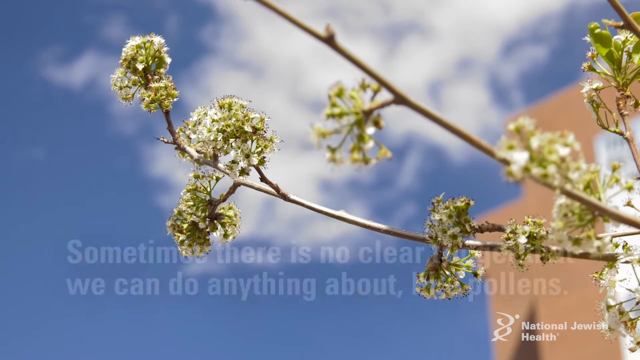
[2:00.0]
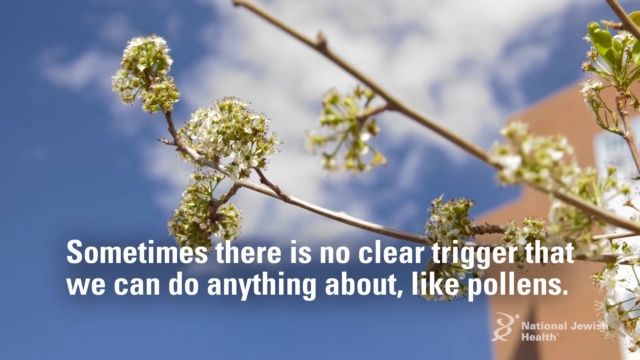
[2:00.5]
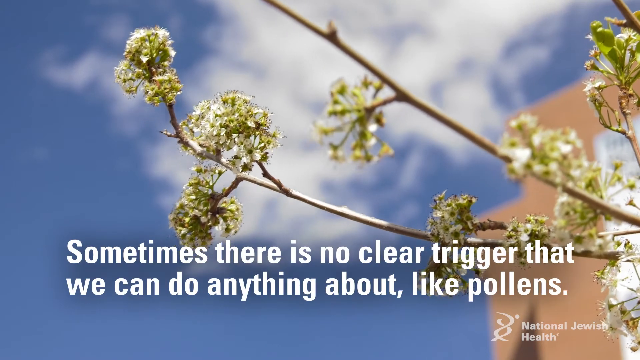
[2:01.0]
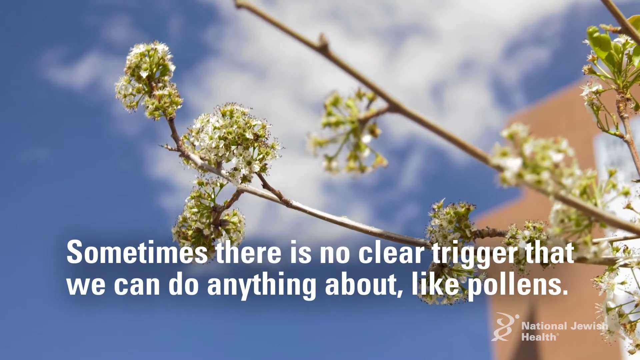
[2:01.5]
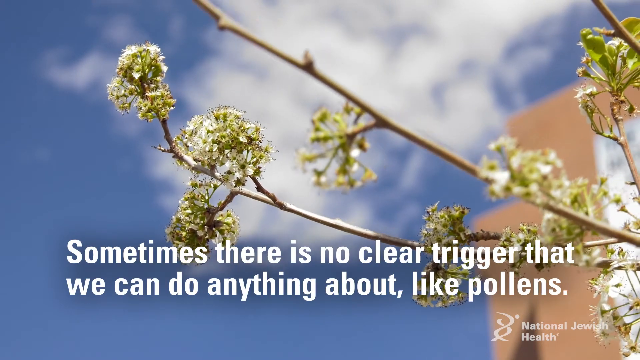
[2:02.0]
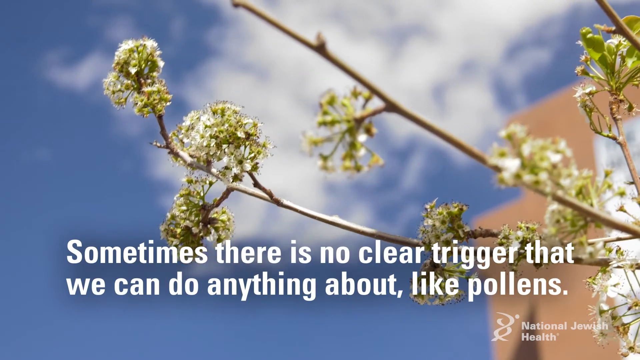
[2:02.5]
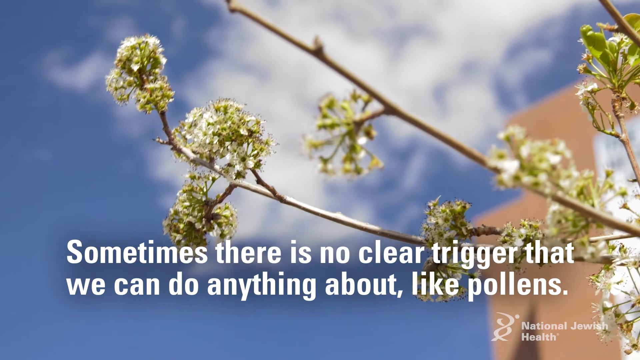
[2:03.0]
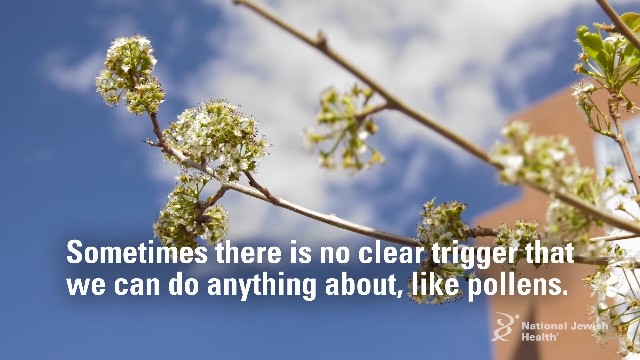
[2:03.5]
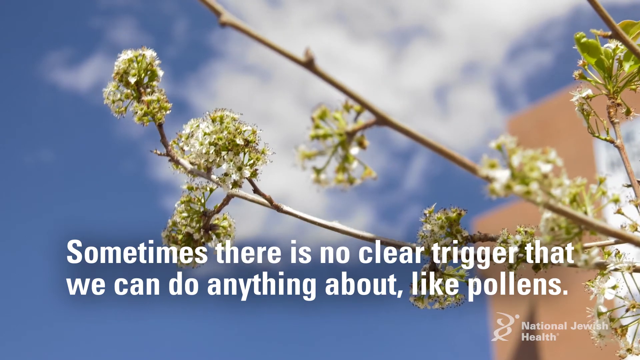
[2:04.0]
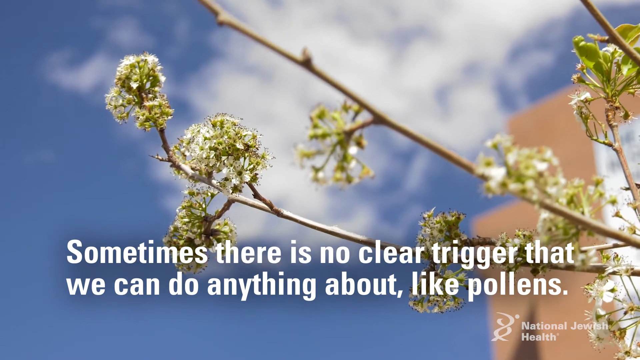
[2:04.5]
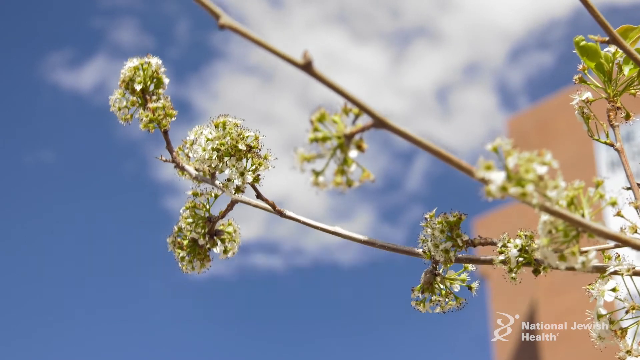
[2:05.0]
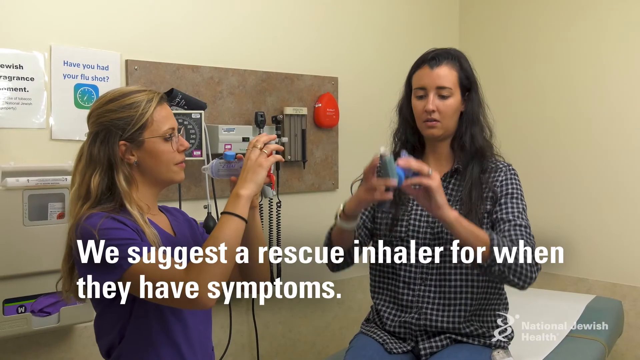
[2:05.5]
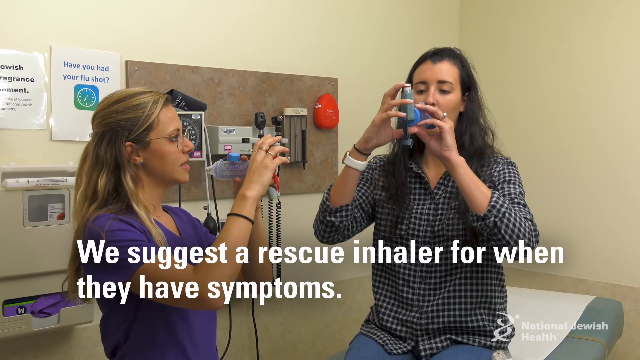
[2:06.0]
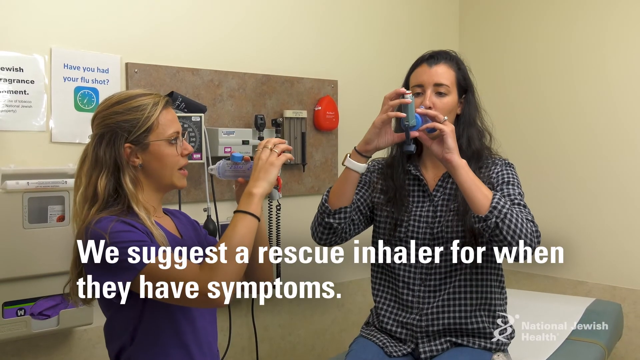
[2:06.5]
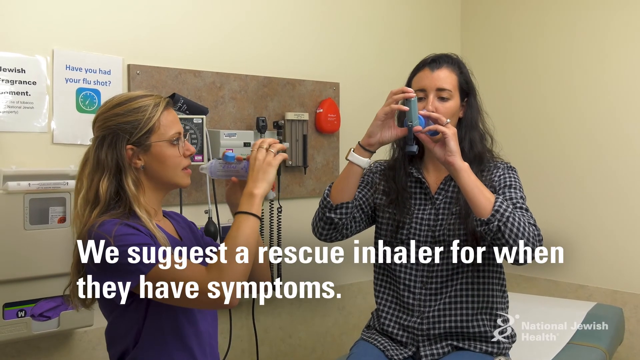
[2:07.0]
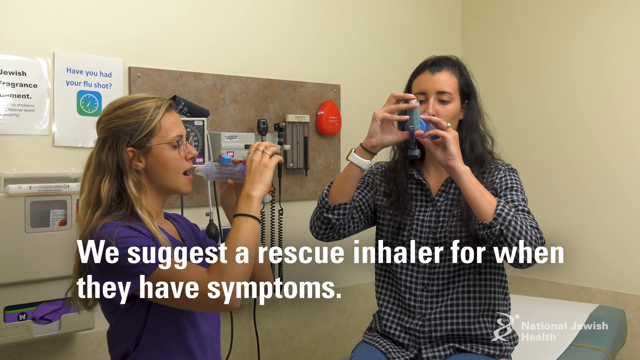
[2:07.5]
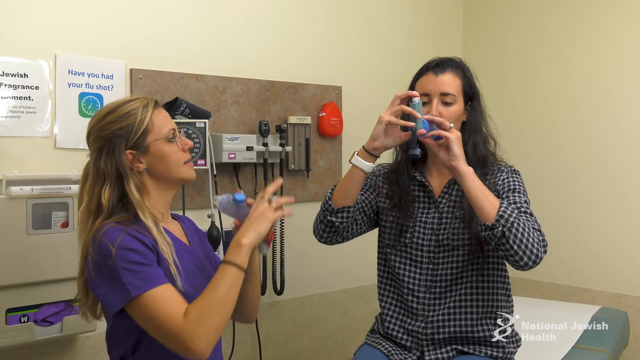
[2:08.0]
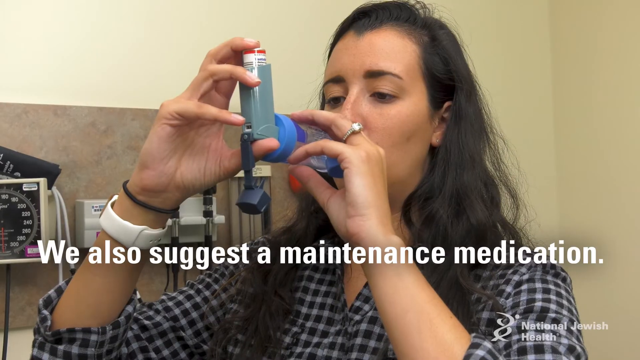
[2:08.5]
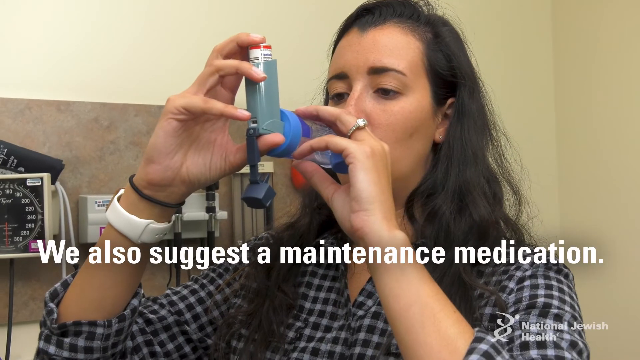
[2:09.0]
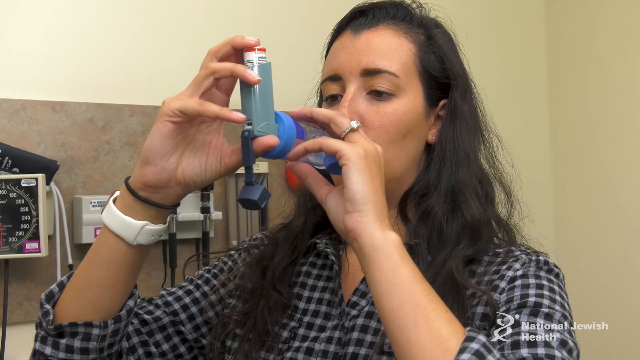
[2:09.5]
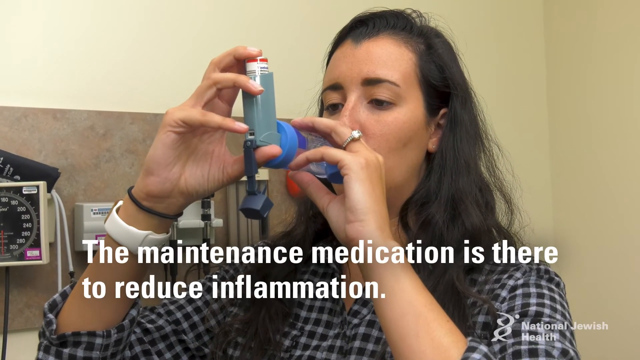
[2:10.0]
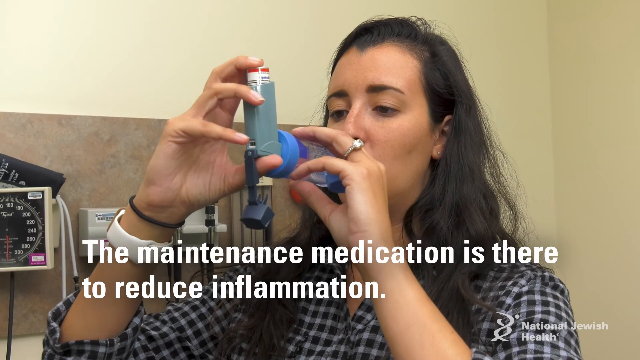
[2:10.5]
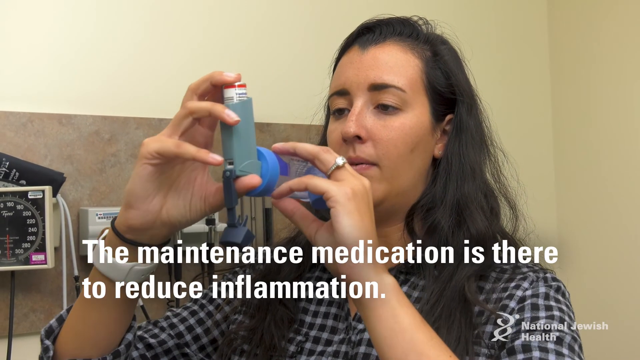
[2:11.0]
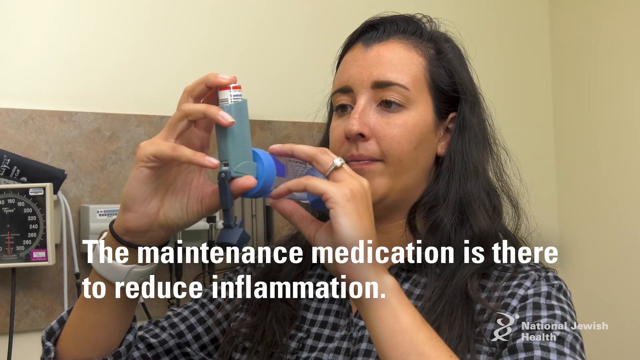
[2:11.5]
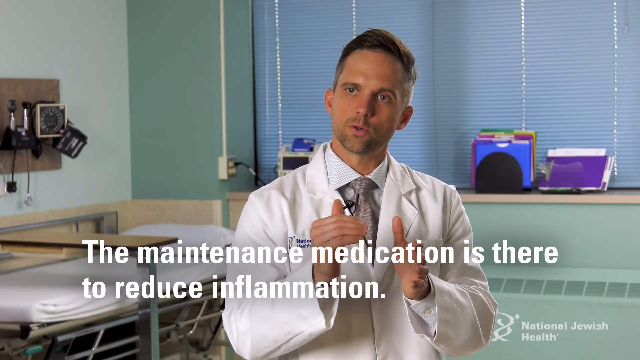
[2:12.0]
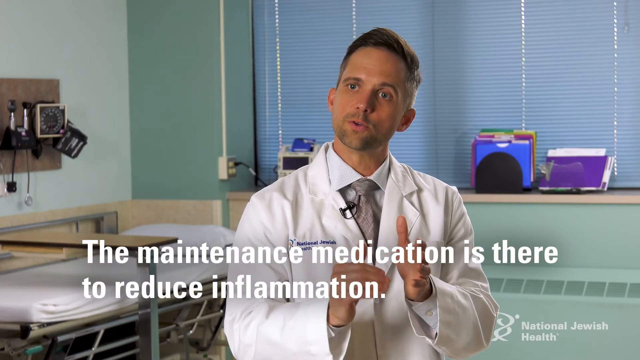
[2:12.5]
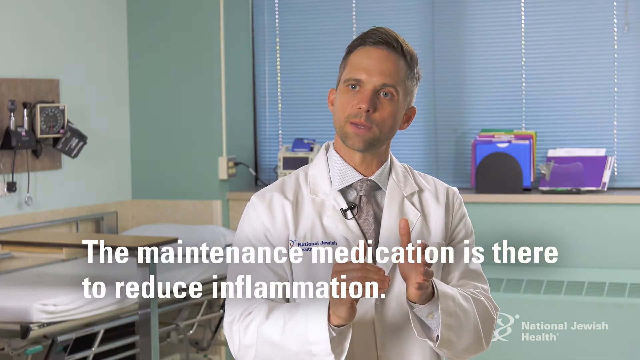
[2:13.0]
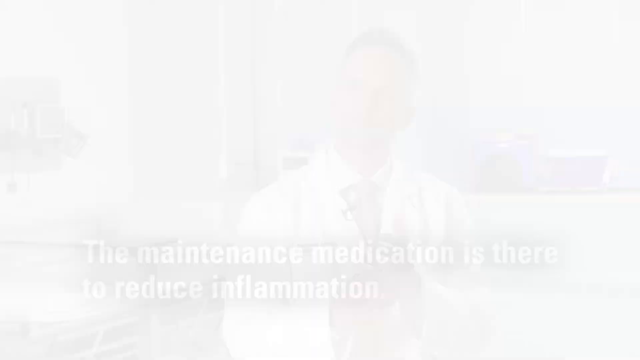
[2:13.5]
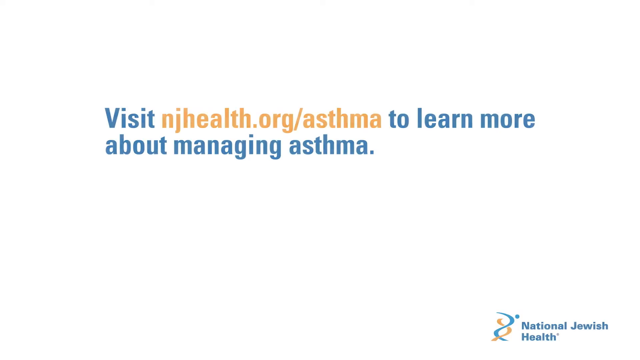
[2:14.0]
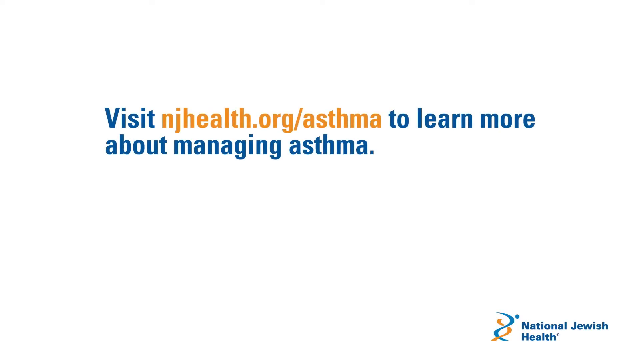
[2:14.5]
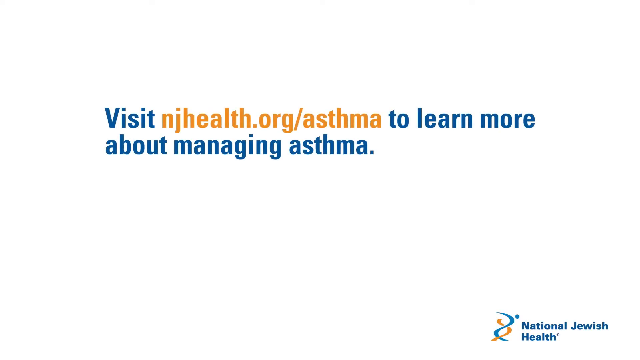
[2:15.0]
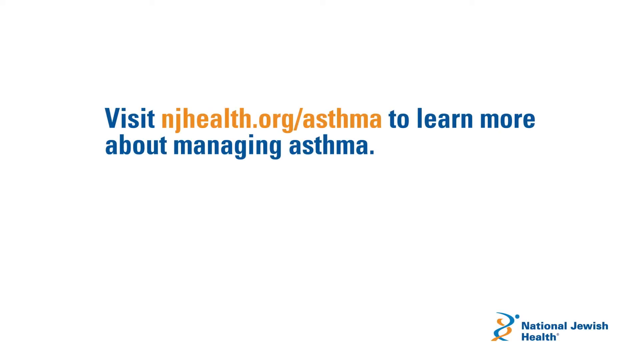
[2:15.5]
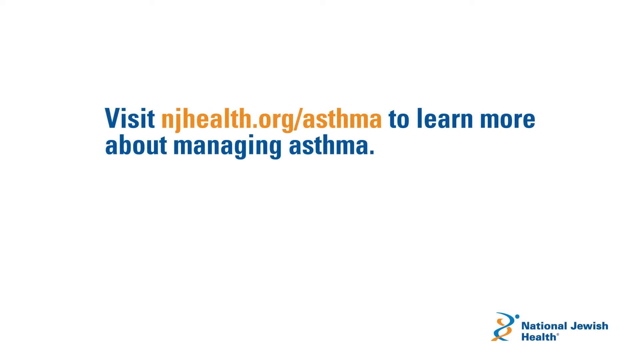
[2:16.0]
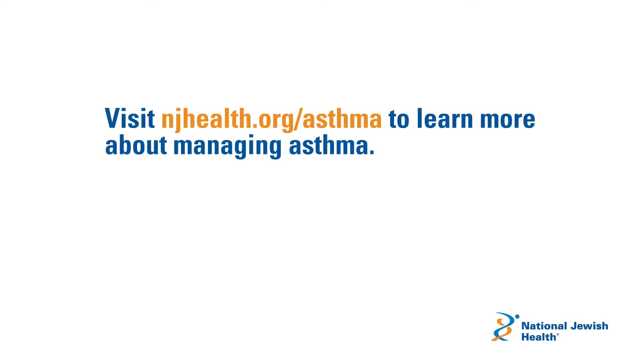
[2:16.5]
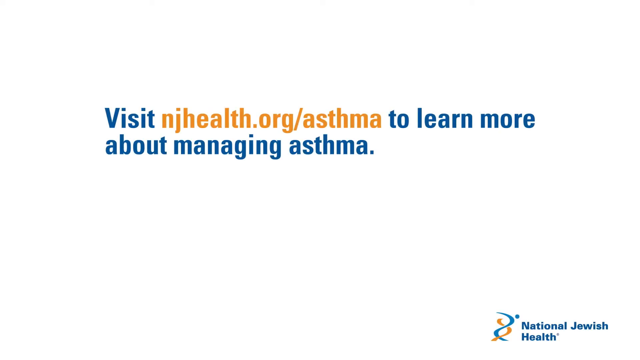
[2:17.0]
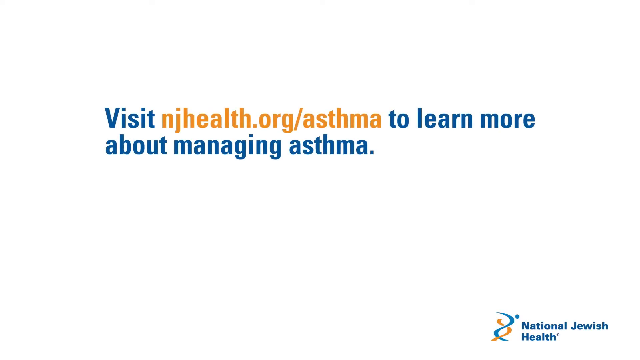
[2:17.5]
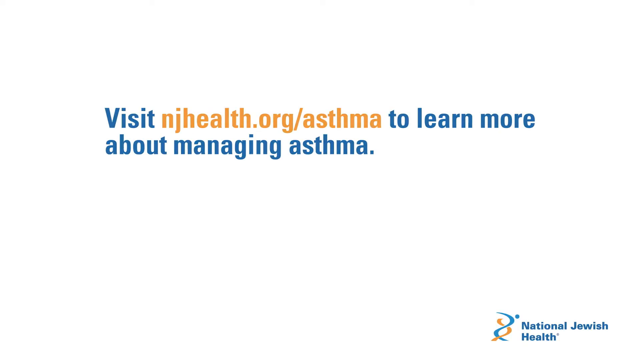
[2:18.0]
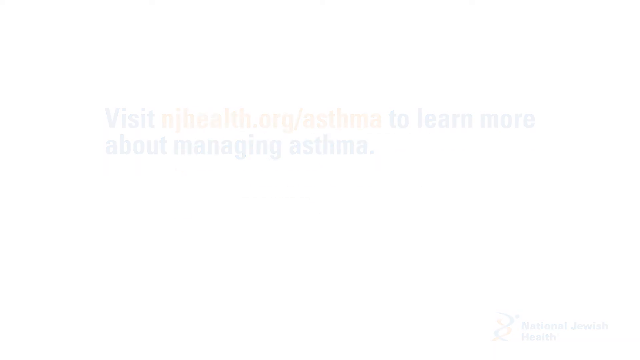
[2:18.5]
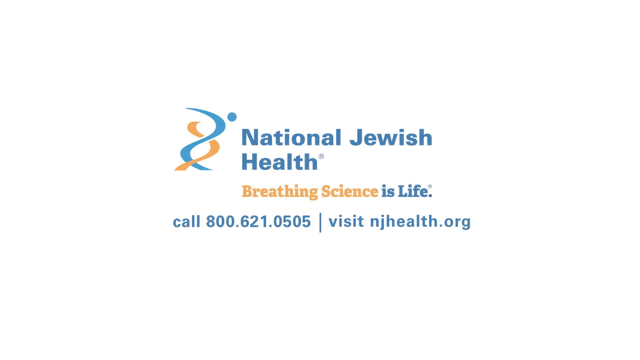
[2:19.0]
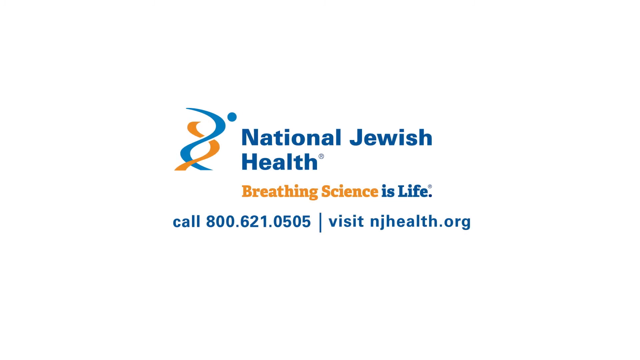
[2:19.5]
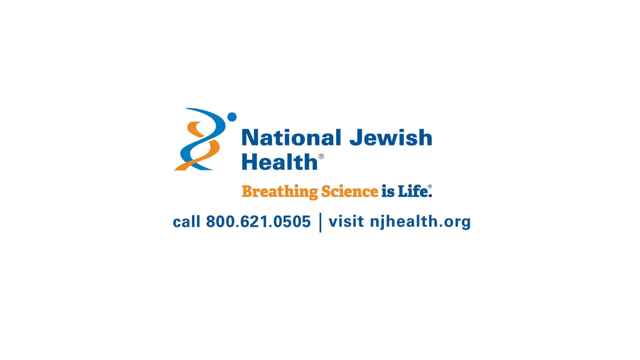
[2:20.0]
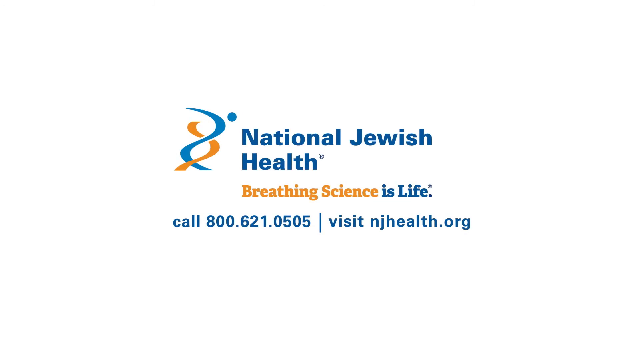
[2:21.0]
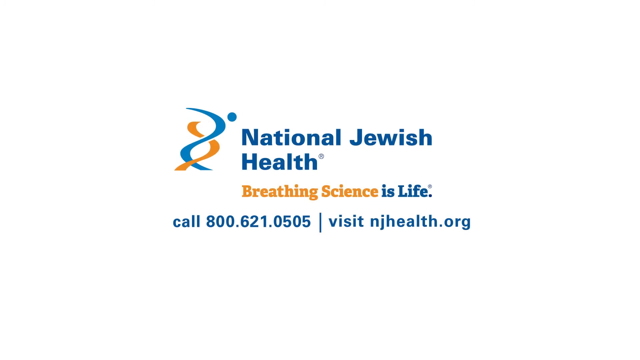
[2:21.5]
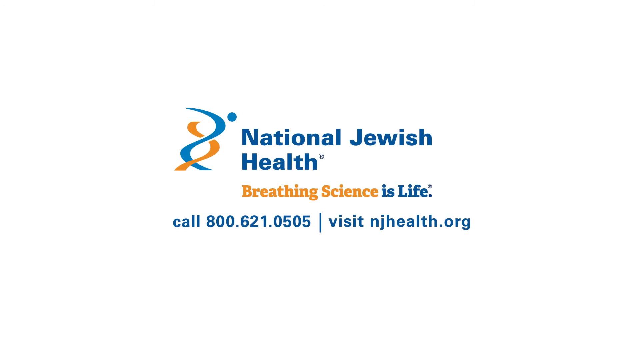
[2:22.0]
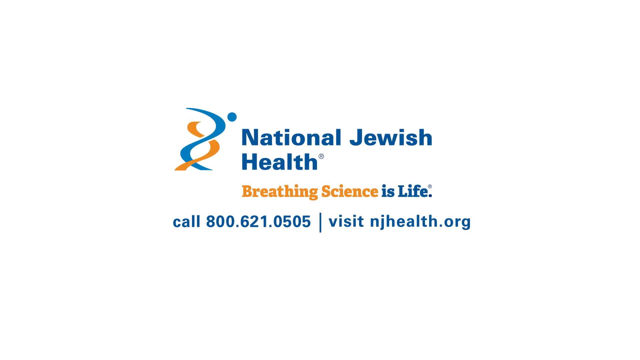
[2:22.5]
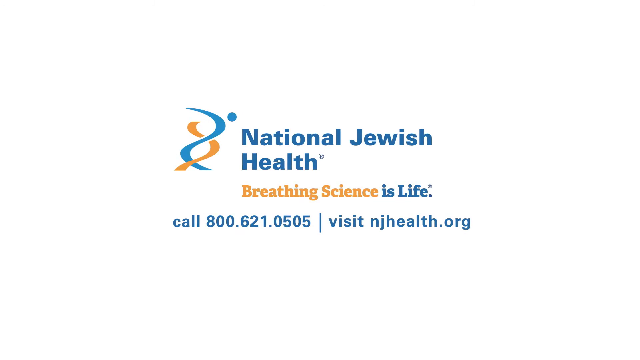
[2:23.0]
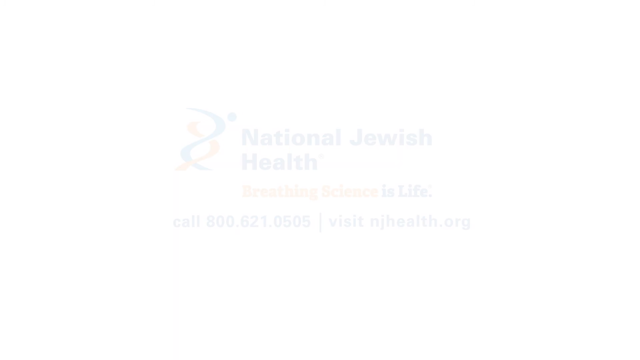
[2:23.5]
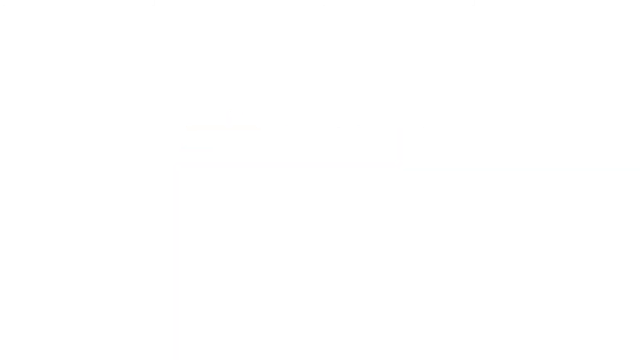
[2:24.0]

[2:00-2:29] A branch with some dried-up flowers on it moves in the wind against a blue sky with some clouds, and part of a brick building is visible. Text underneath reads "sometimes there is no clear trigger that we can do anything about, like pollens". A nurse teaches a woman how to use a spacer with her emergency inhaler, and text underneath reads "we also suggest a maintenance medication. And the maintenance medication is there to reduce inflammation". Then the screen reads "visit njhealth.org asthma to learn more about managing asthma". It goes back to the National Jewish Health Breathing Sciences Life screen with "call 800-621-0505 or visit njhealth.org".